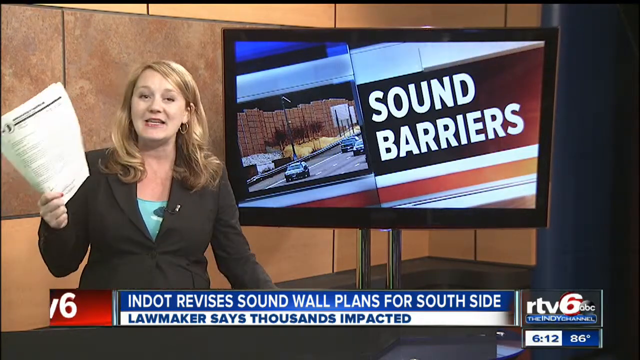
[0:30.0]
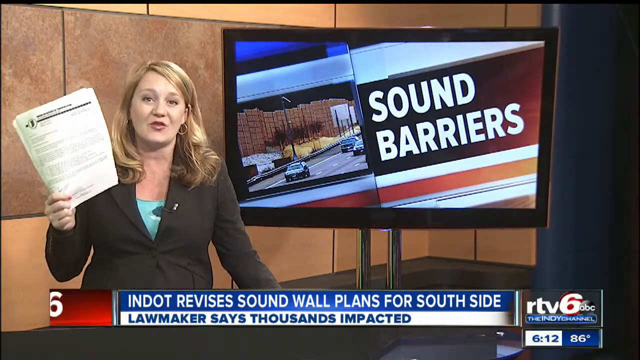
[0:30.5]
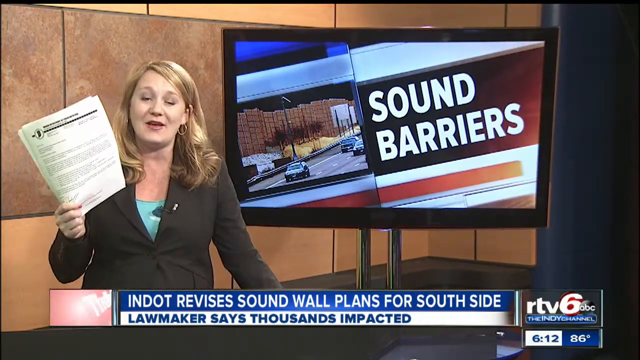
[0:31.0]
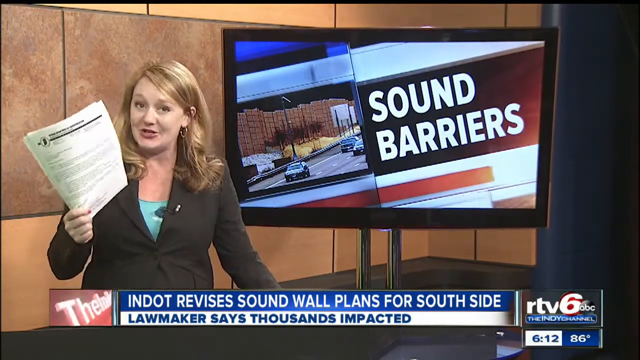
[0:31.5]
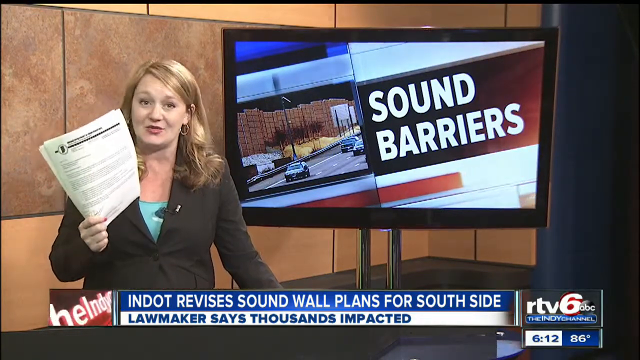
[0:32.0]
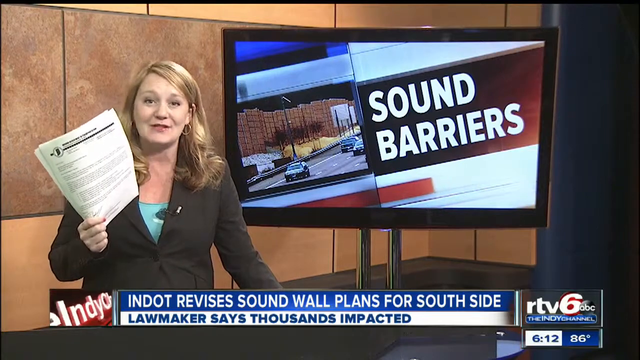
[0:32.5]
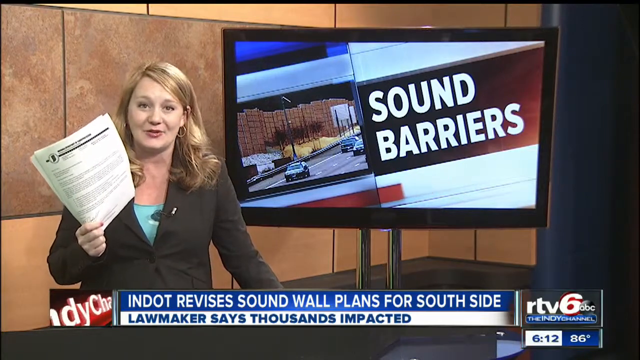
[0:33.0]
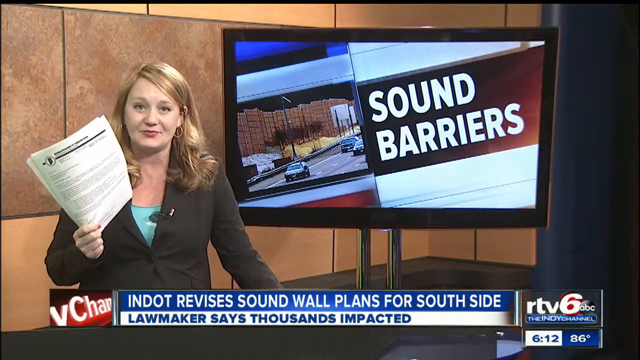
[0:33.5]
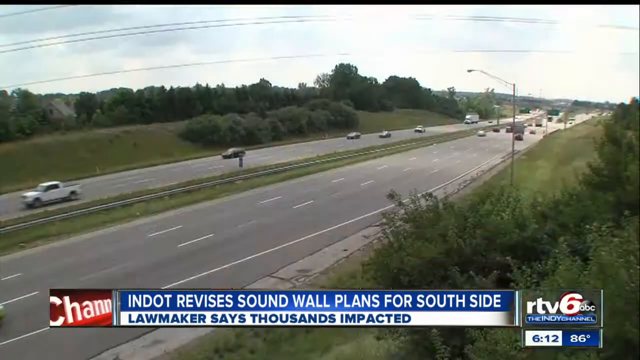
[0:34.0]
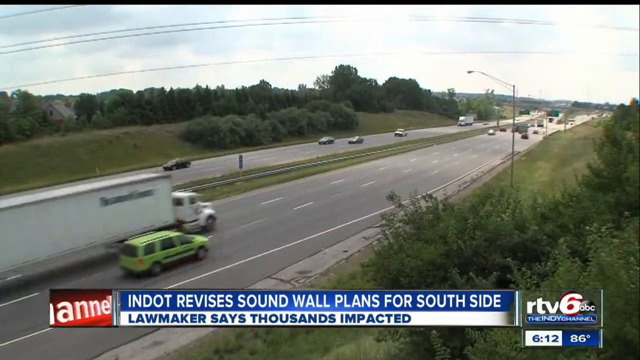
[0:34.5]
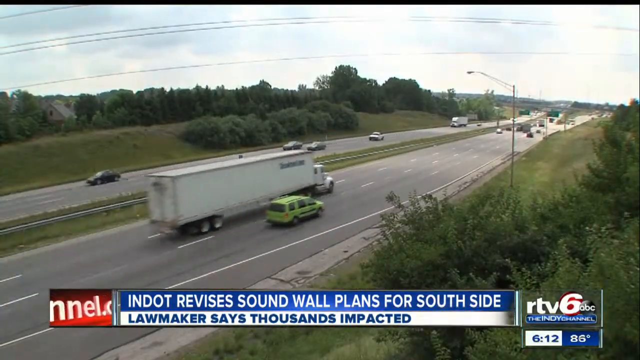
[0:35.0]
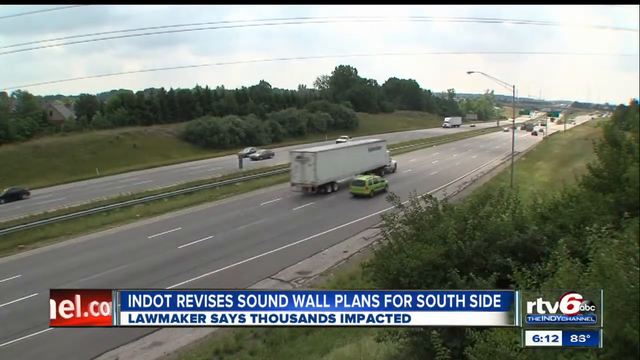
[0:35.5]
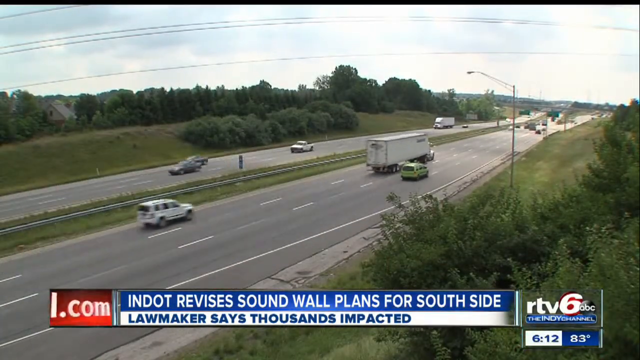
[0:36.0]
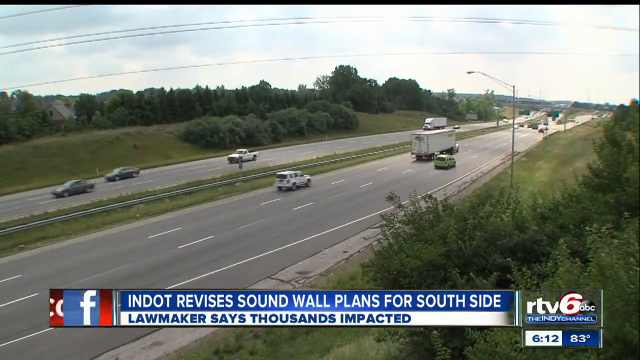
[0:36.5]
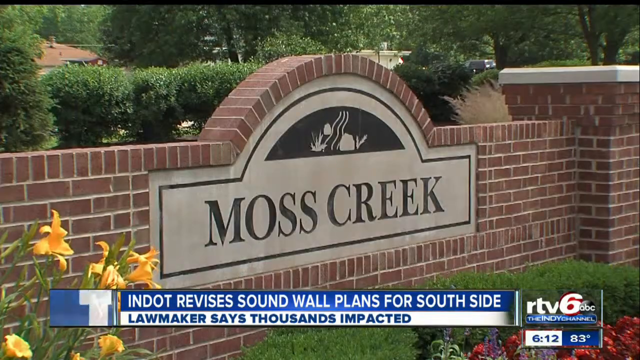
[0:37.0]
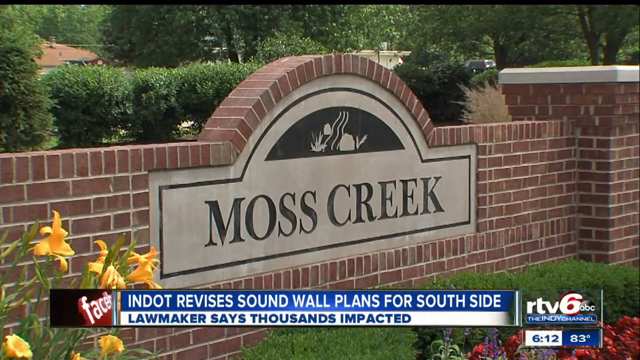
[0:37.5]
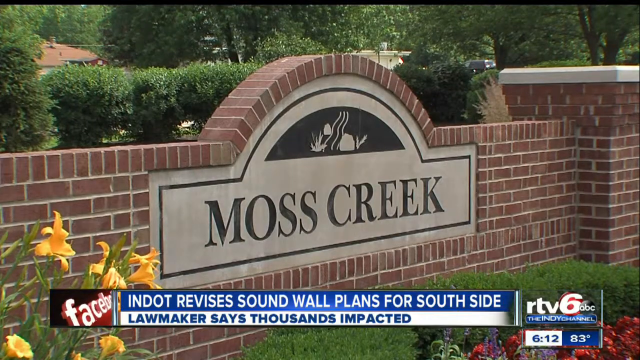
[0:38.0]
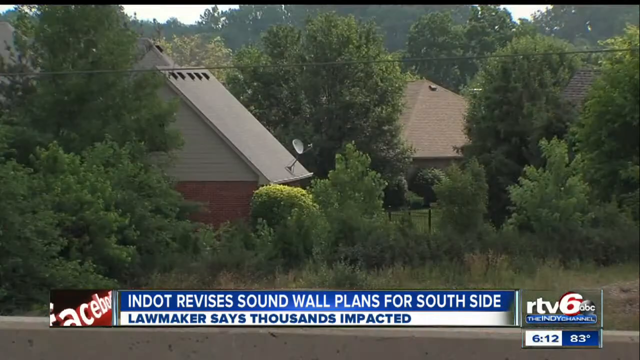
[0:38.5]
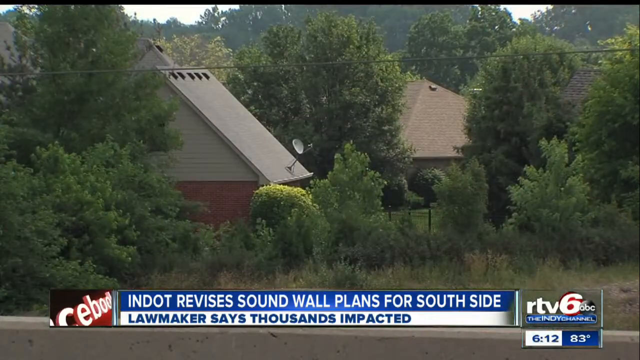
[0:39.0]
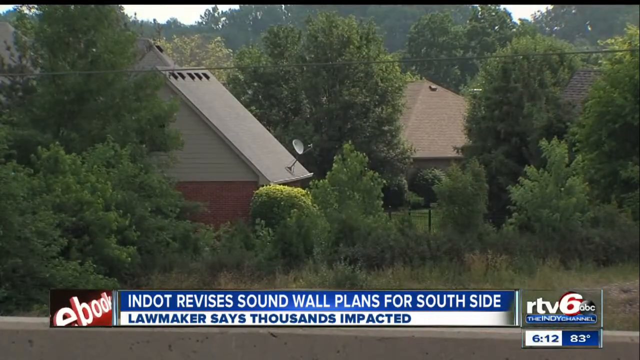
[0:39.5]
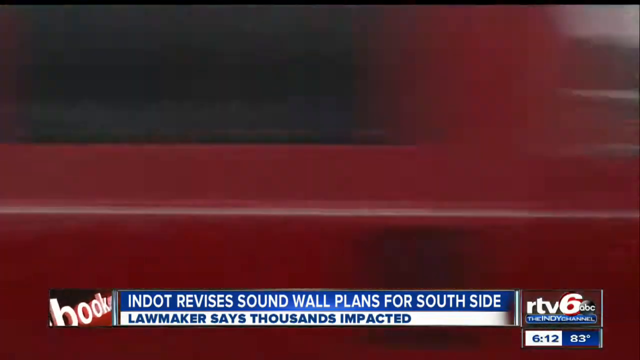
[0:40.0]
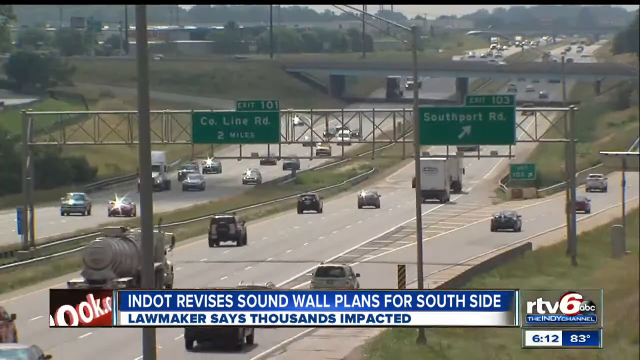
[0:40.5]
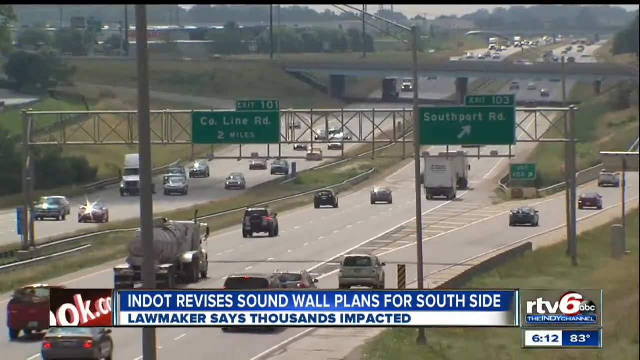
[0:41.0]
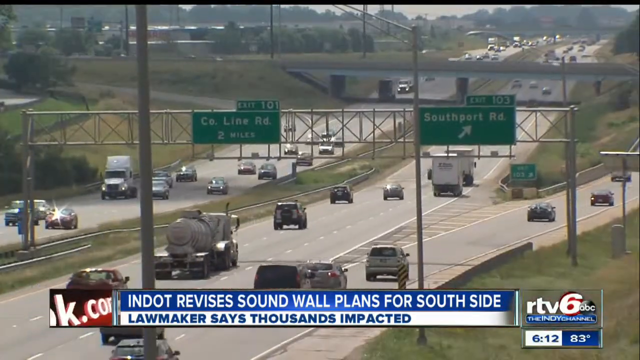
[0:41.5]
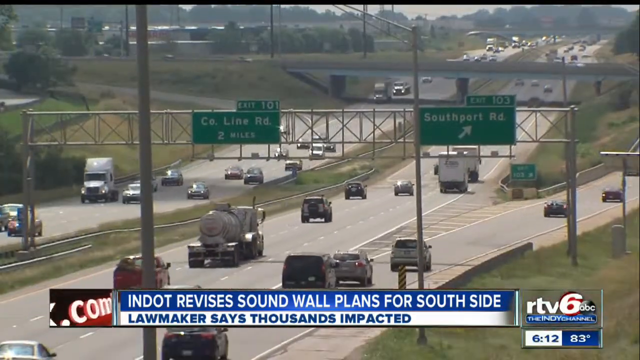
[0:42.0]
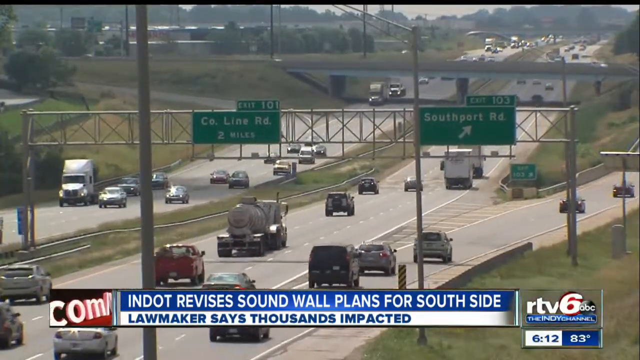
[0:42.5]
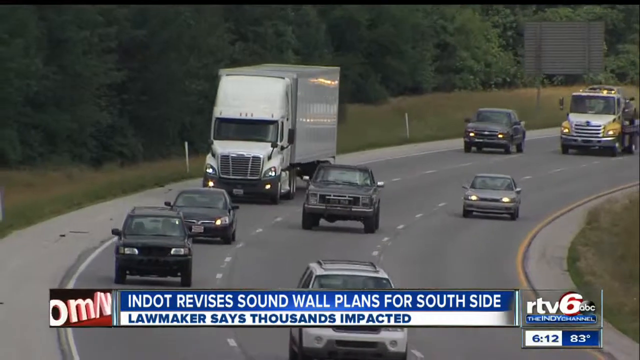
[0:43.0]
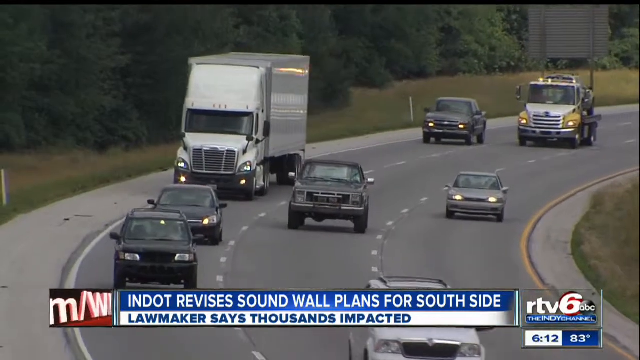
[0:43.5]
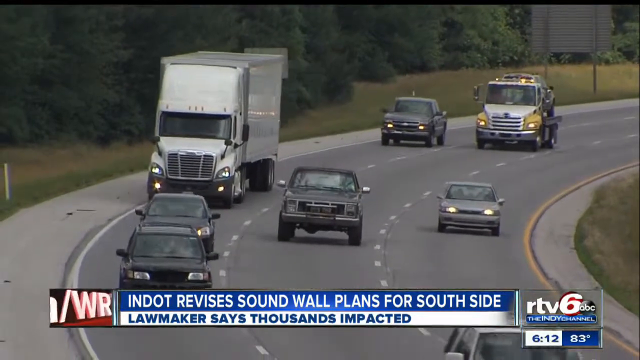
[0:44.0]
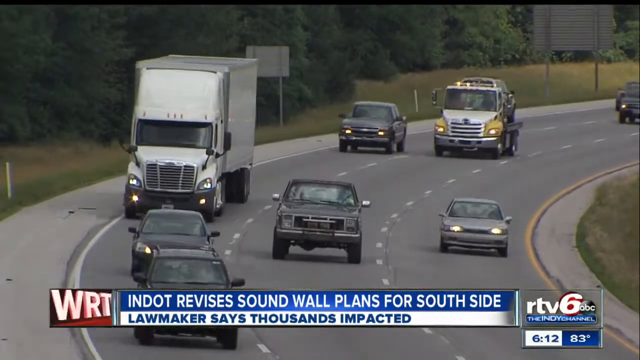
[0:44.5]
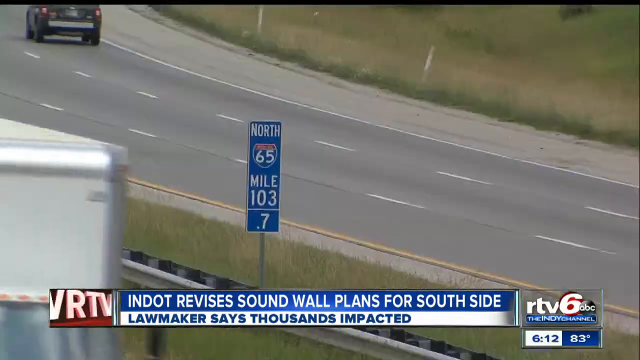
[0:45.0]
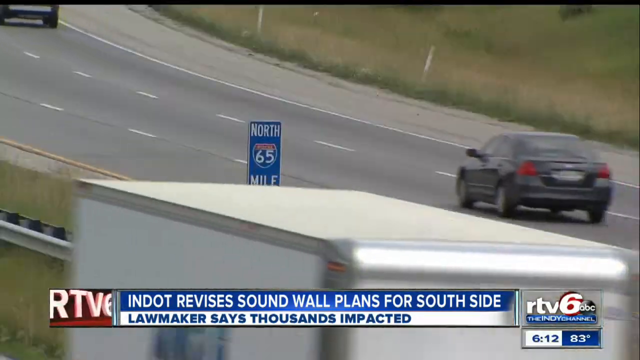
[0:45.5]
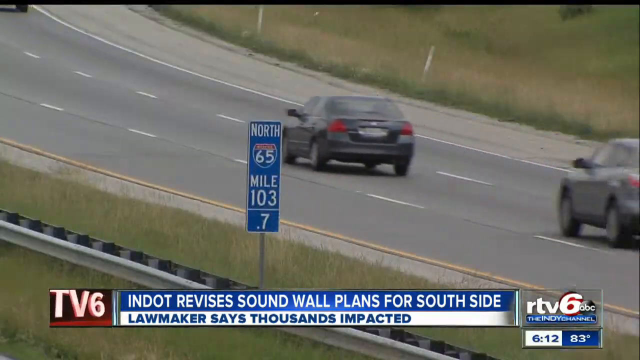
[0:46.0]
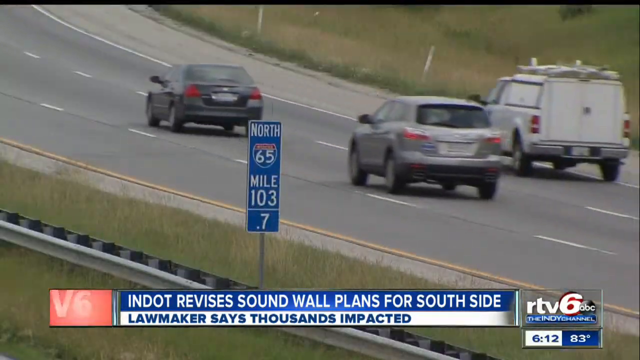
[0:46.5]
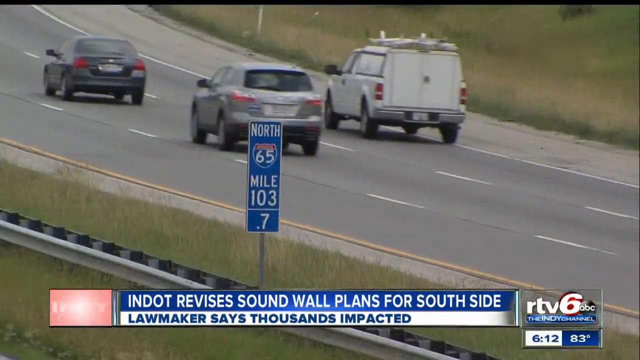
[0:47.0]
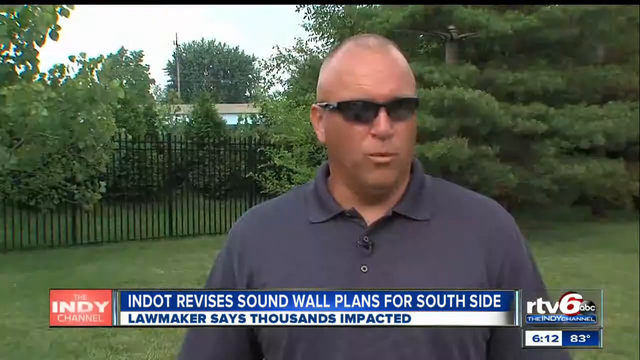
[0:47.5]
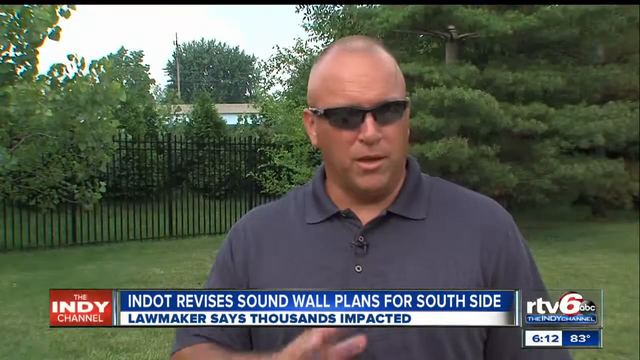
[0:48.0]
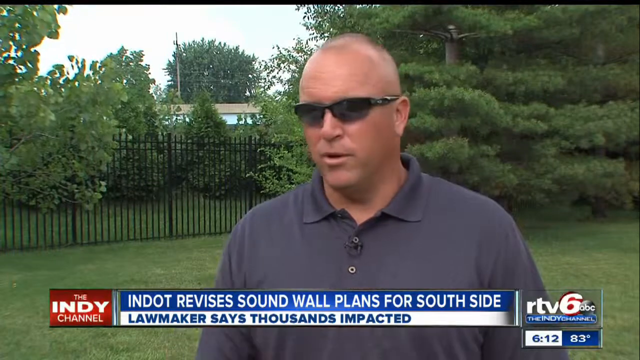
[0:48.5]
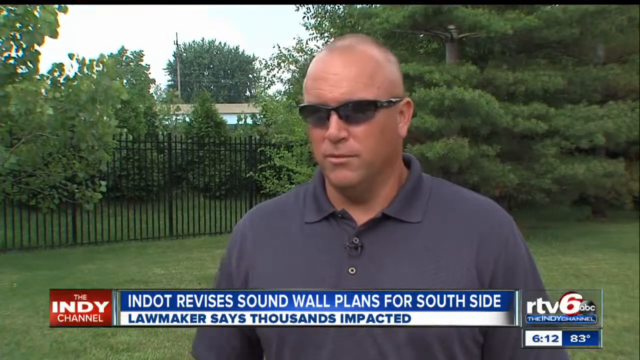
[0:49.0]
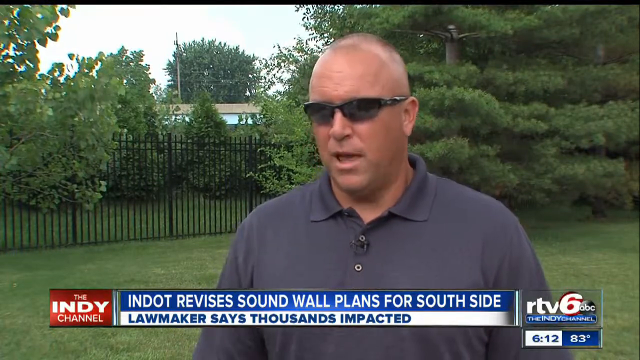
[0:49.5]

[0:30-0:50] Sound wall plans for Southside involve installing the wall around a main road filled with a lot of traffic, where people in the houses nearby complain about the noise from the cars.